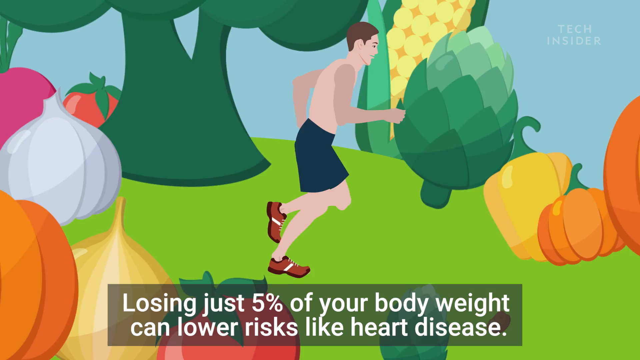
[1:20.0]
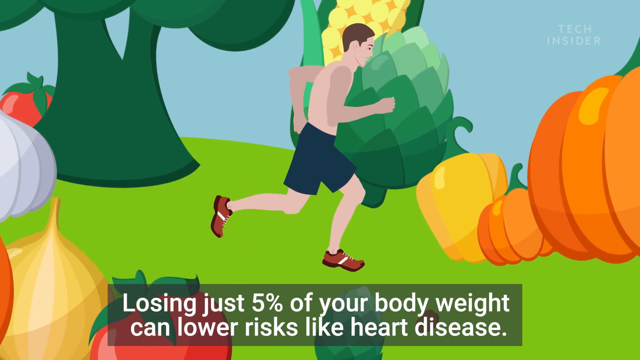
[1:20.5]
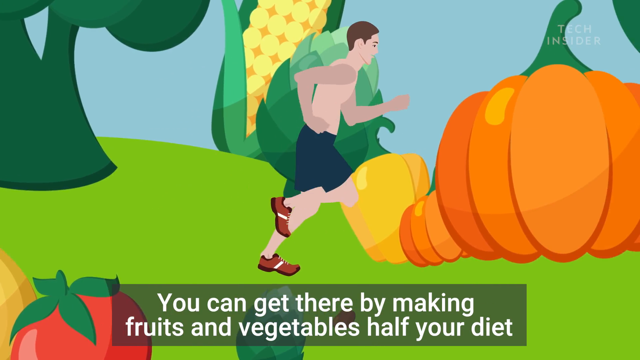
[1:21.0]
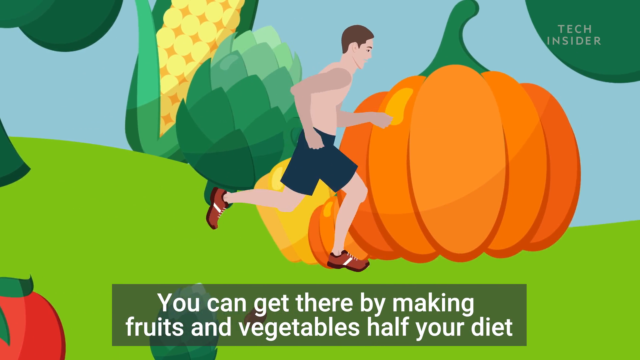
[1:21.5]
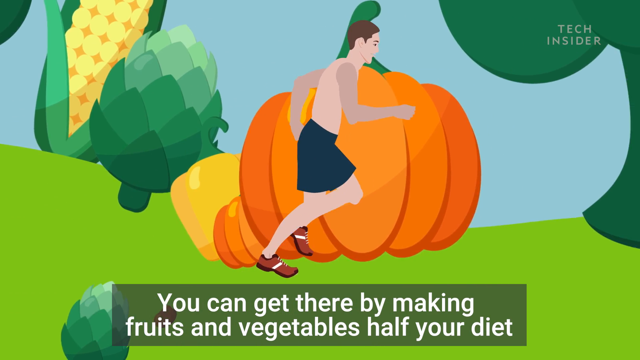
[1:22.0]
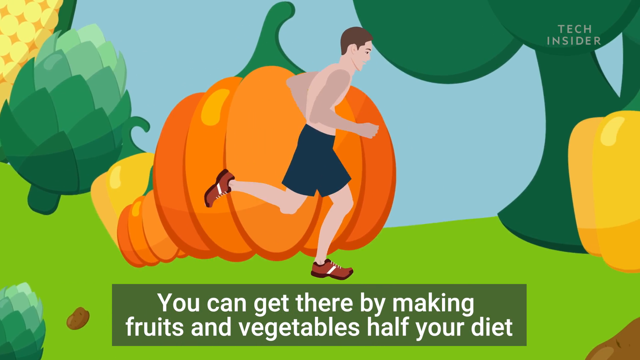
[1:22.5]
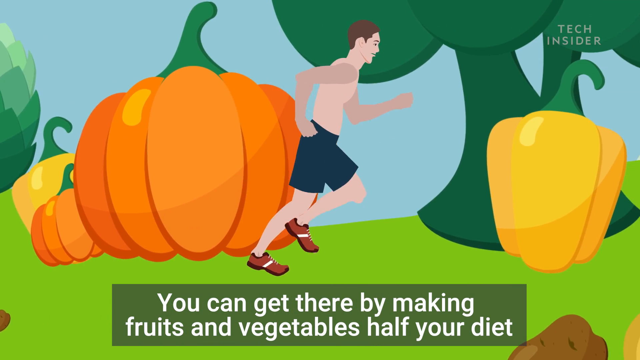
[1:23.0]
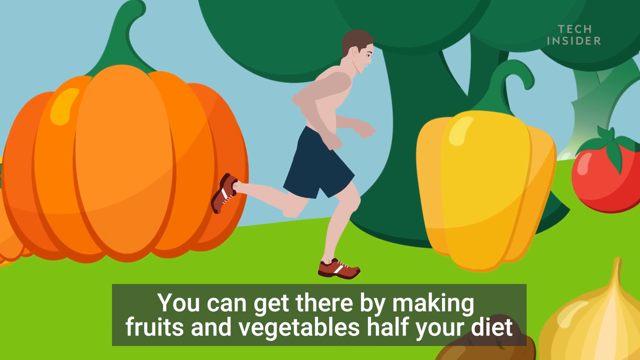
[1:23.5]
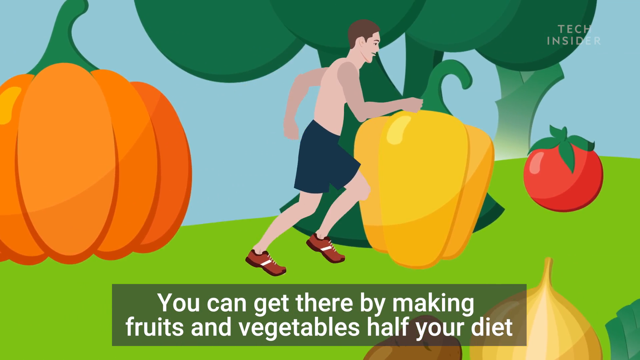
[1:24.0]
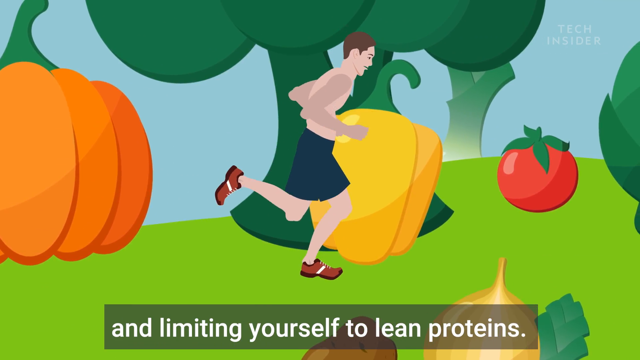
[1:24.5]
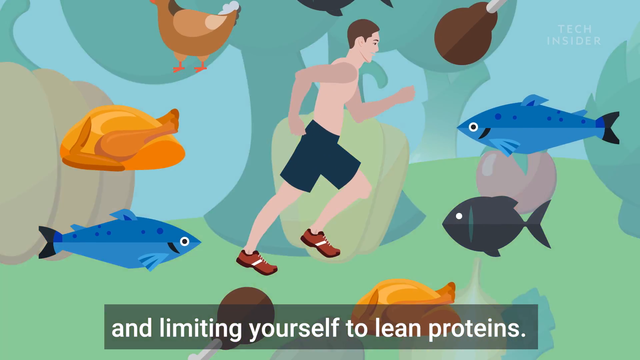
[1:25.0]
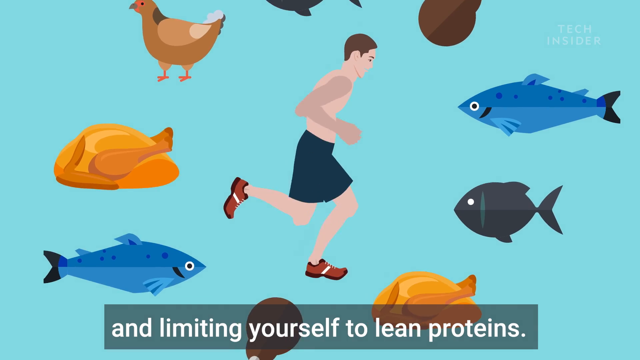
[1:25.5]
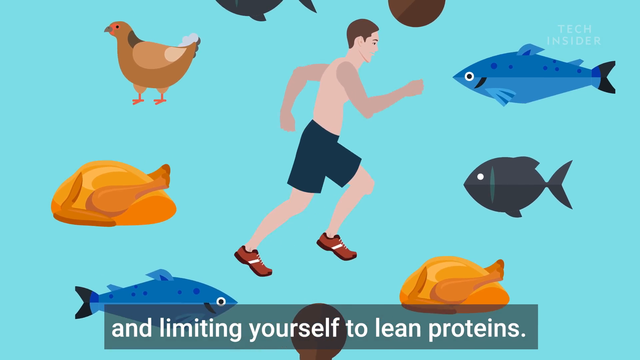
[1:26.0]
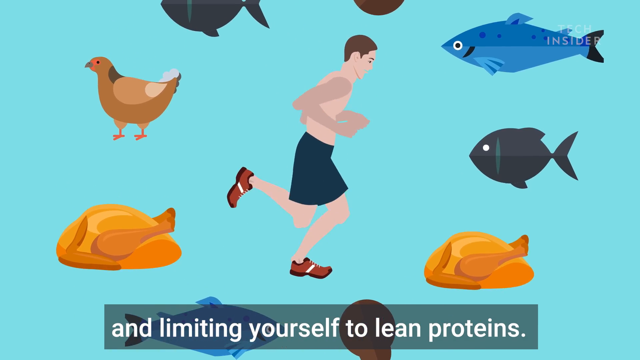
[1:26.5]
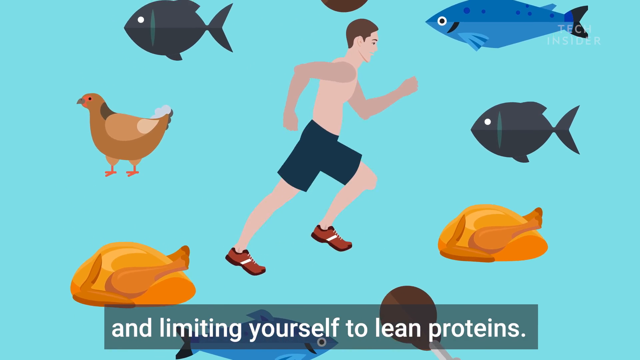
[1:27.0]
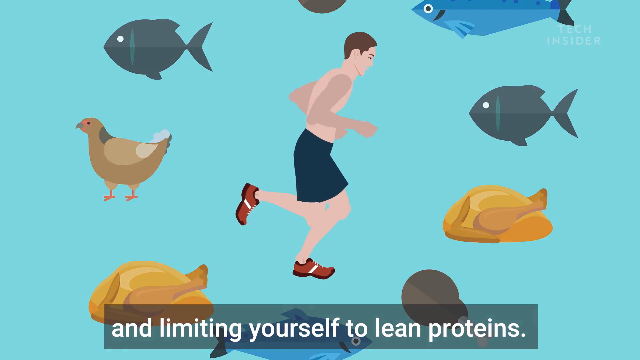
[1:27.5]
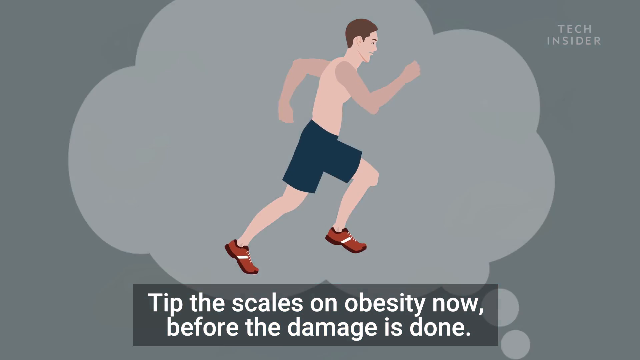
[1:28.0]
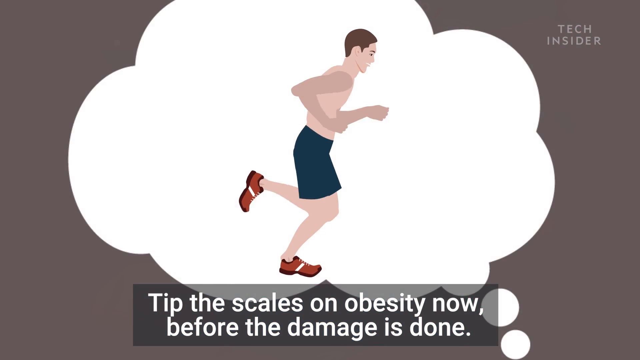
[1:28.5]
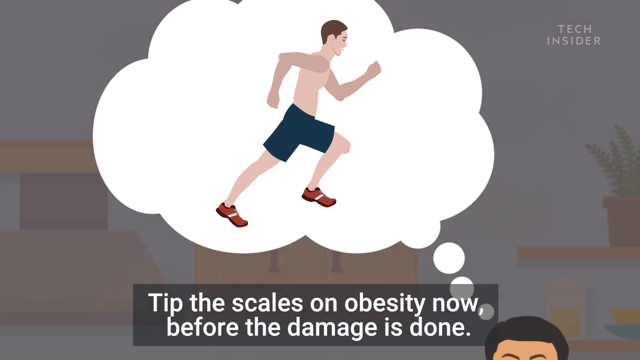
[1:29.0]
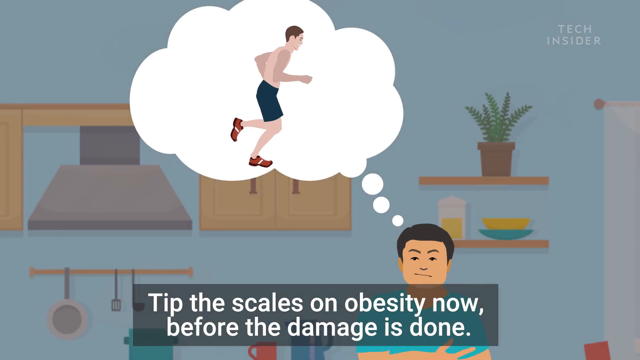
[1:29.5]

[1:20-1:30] The lean man runs, surrounded by graphics of fruits and vegetables, with the text "losing just 5% of your body weight can lower risks like heart disease" underneath. As he keeps running, the text changes to "you can get there by making fruits and vegetables half your diet and limiting yourself to lean proteins." He then runs past illustrations of fish, chicken and turkey, and the text reads "tip the scales on obesity now before the damage is done." A thought bubble appears in the middle of the screen with the lean man running inside it; the bubble seems to come from the head of the man in the blue shirt, who is standing in the middle of the kitchen.